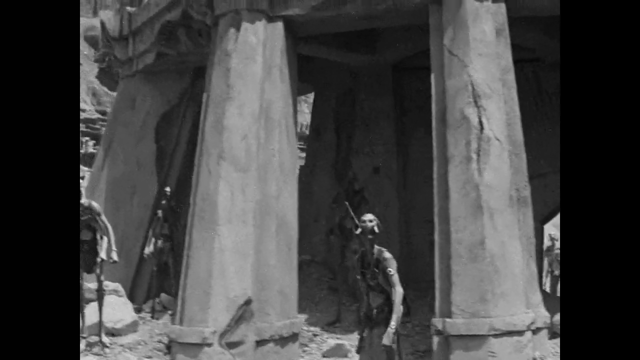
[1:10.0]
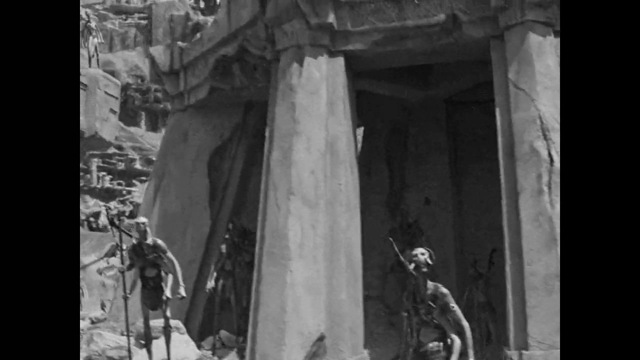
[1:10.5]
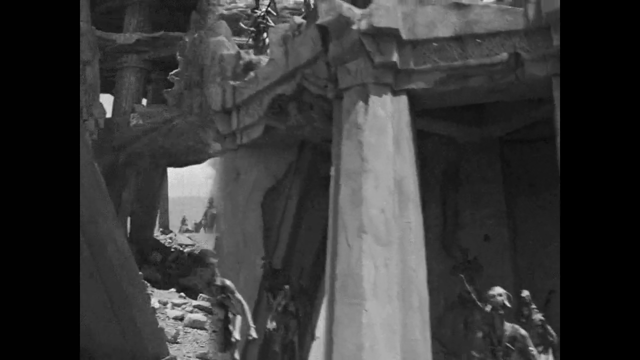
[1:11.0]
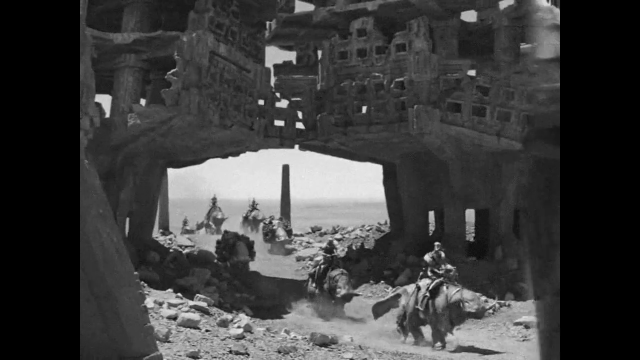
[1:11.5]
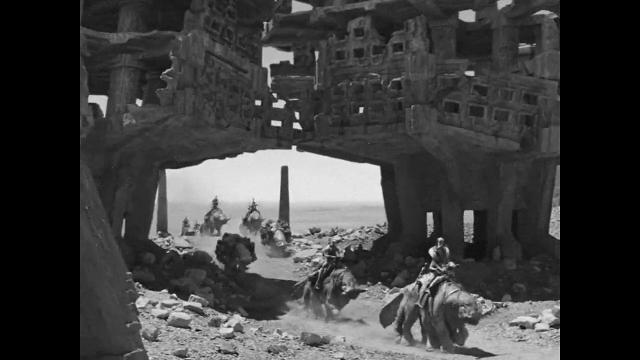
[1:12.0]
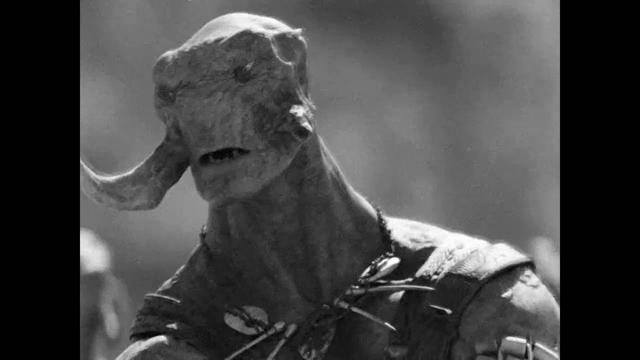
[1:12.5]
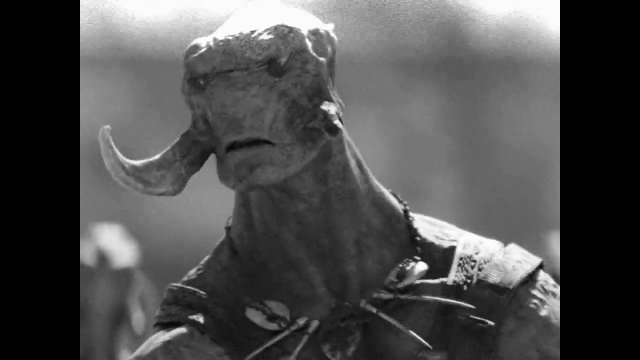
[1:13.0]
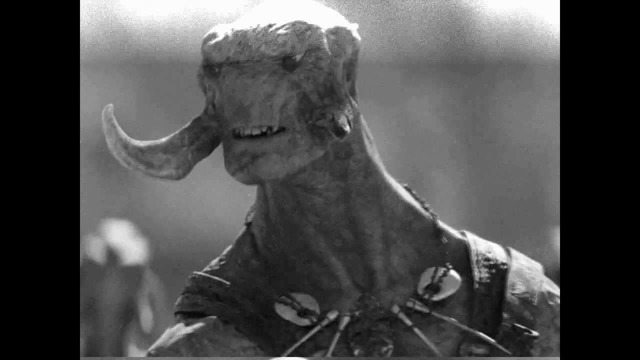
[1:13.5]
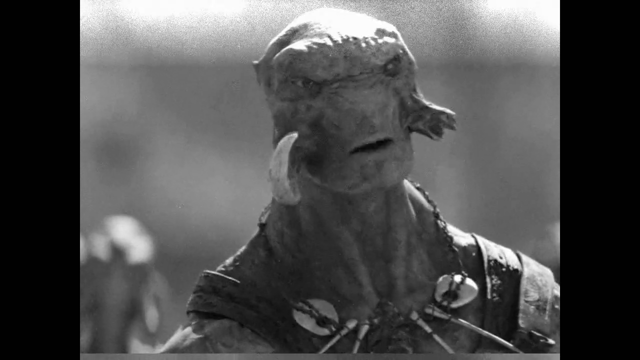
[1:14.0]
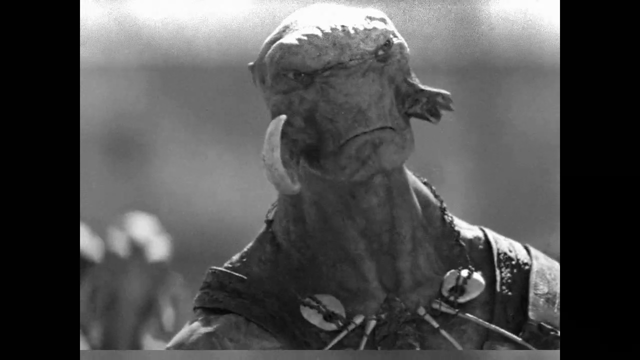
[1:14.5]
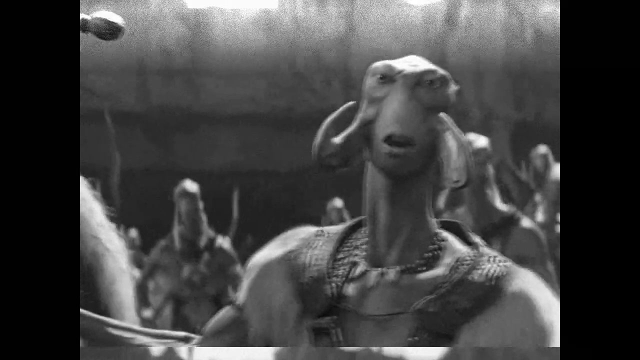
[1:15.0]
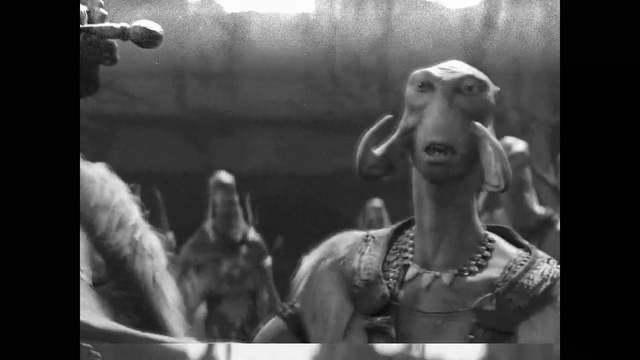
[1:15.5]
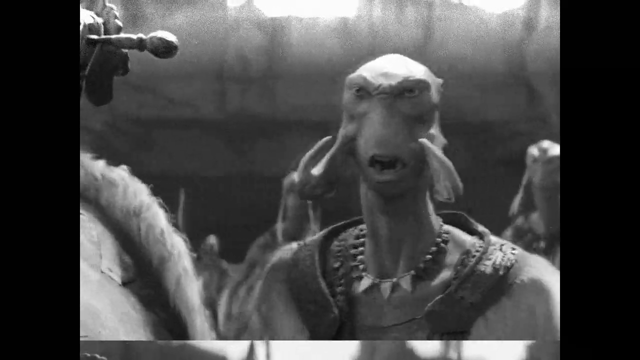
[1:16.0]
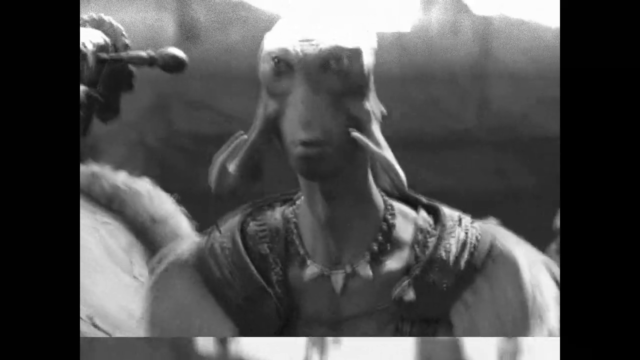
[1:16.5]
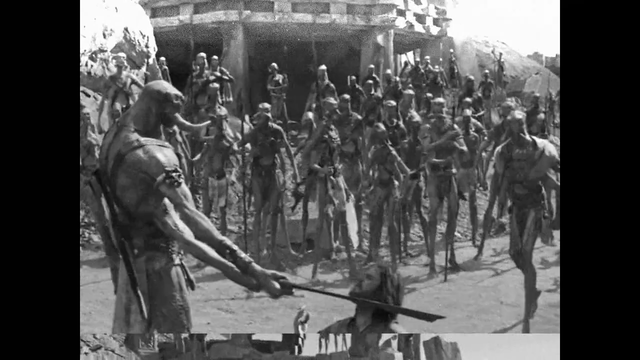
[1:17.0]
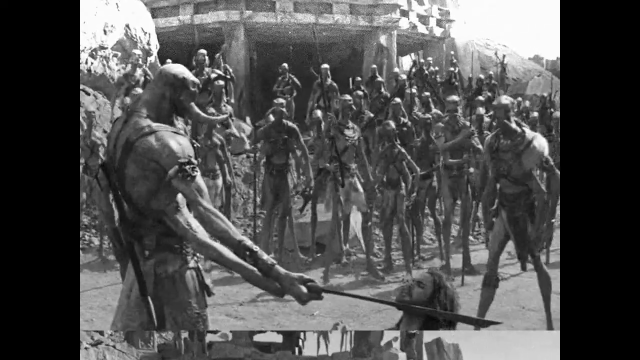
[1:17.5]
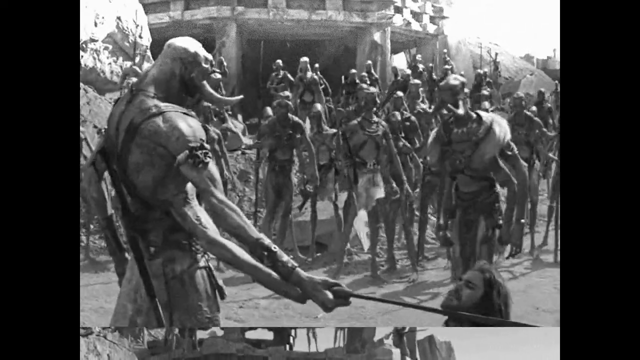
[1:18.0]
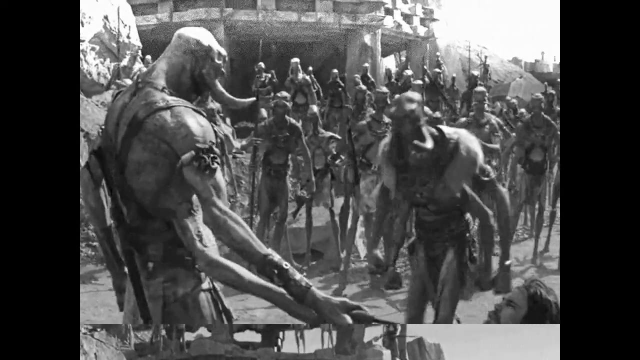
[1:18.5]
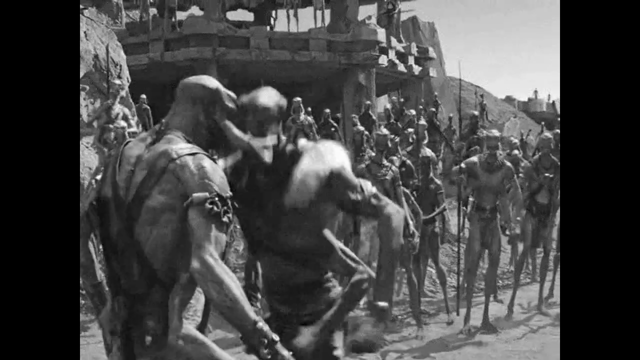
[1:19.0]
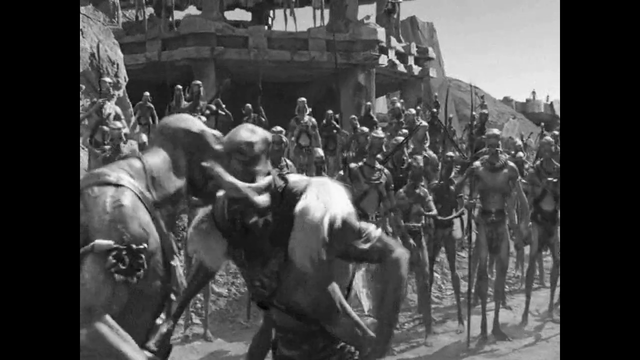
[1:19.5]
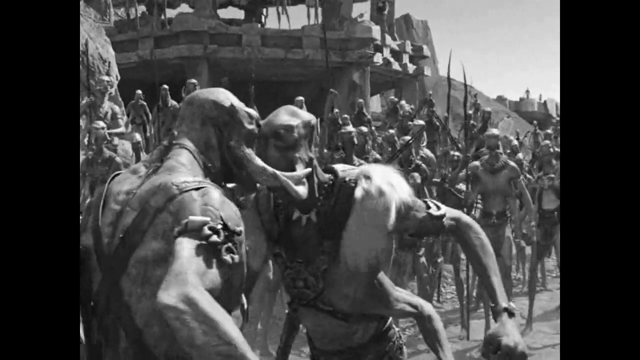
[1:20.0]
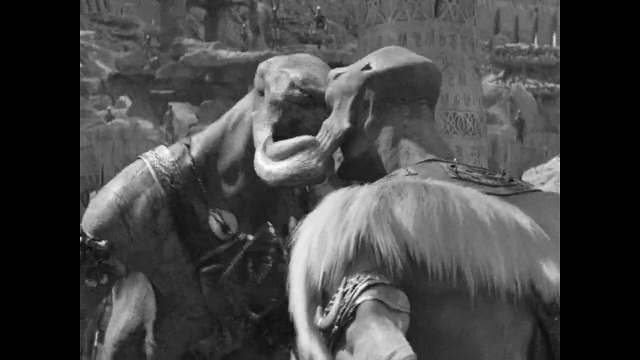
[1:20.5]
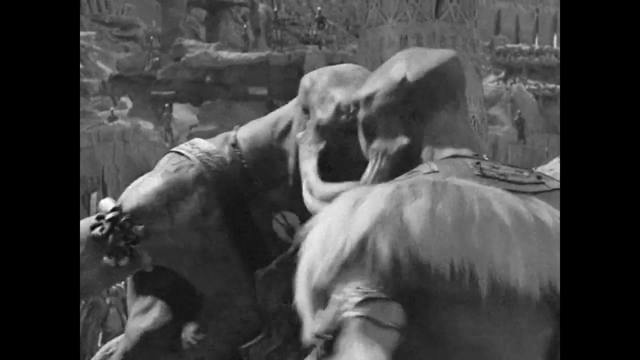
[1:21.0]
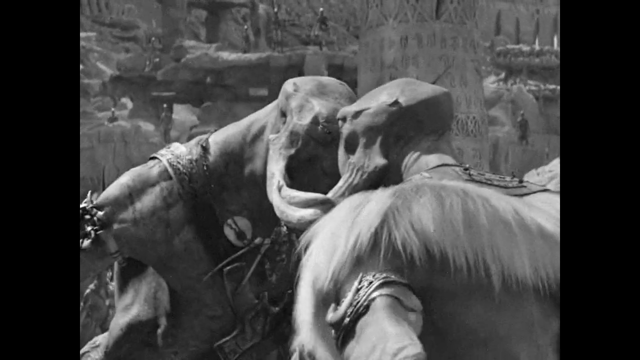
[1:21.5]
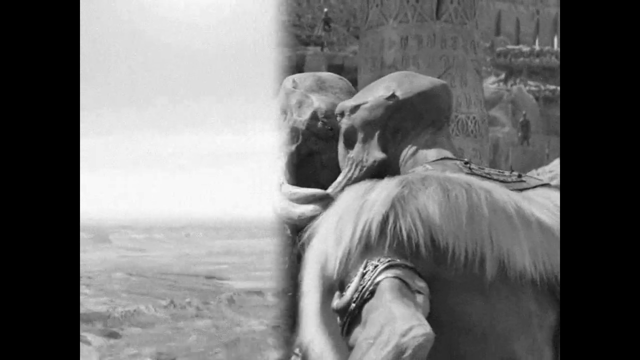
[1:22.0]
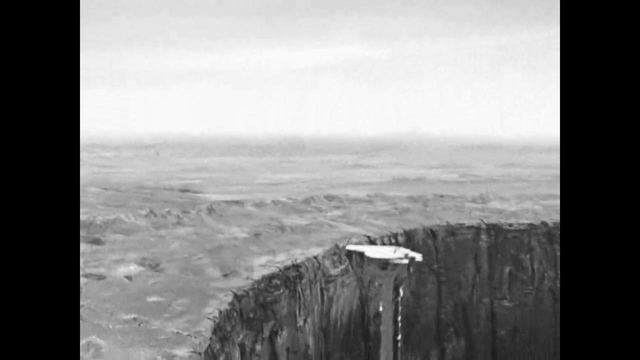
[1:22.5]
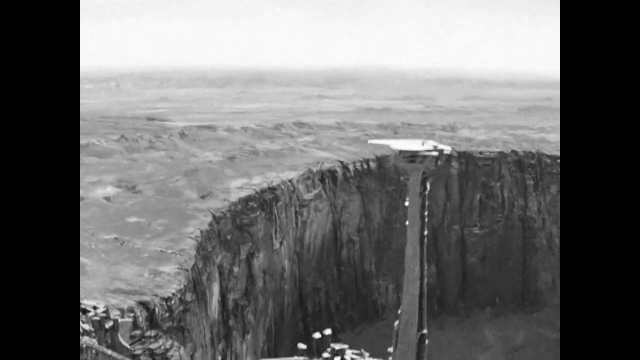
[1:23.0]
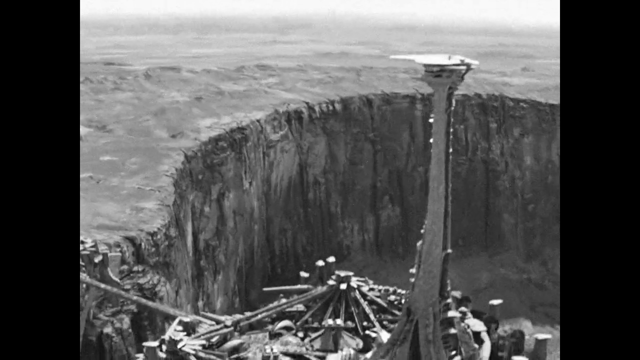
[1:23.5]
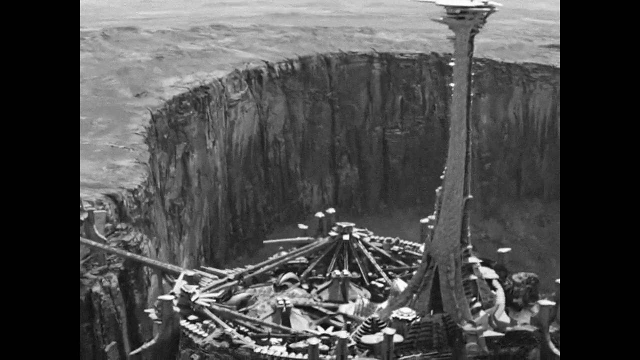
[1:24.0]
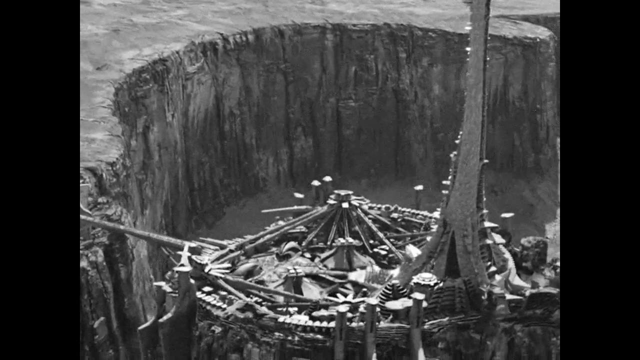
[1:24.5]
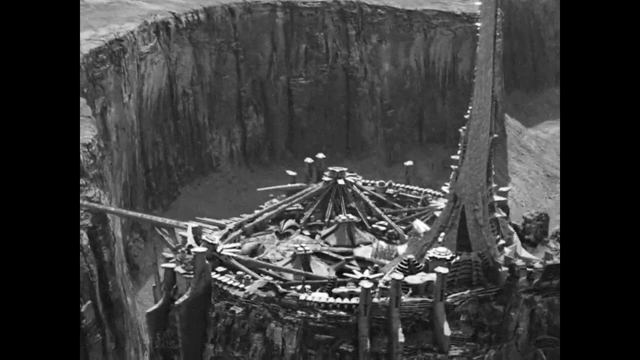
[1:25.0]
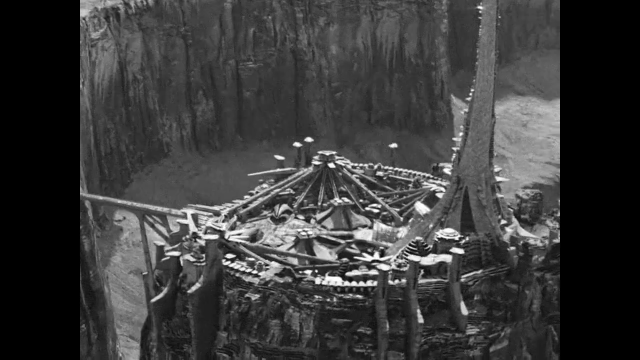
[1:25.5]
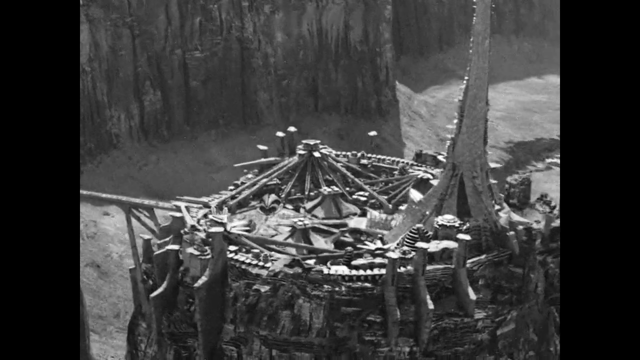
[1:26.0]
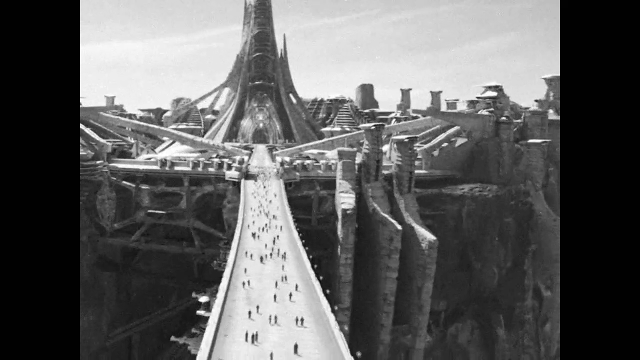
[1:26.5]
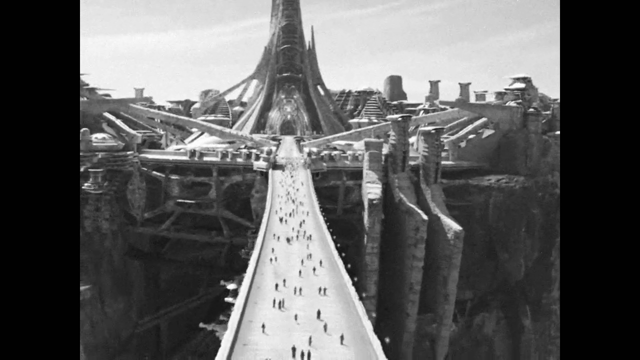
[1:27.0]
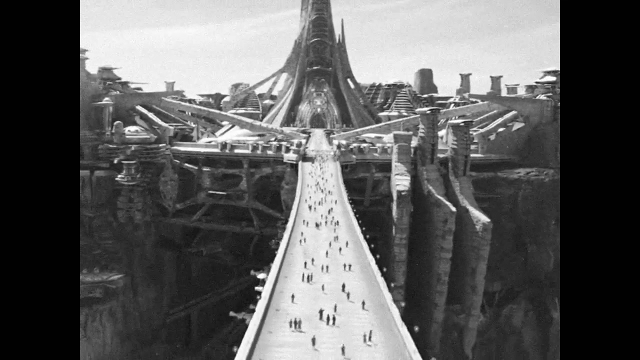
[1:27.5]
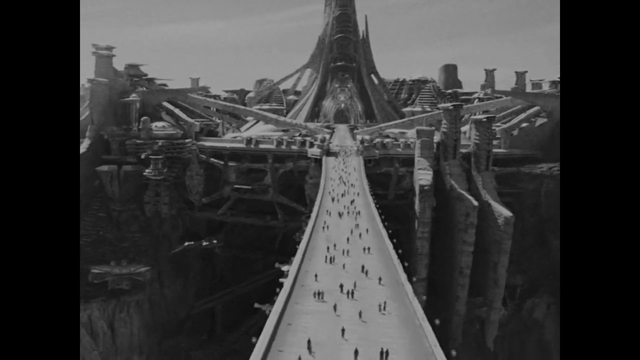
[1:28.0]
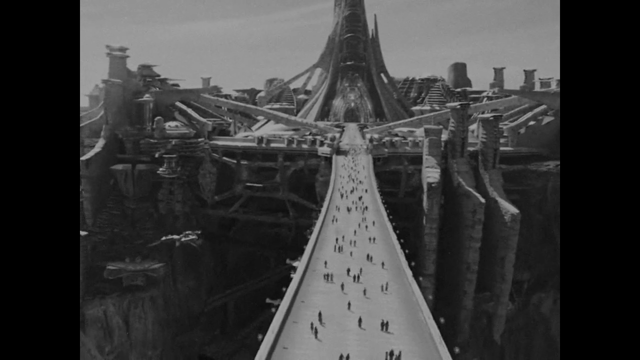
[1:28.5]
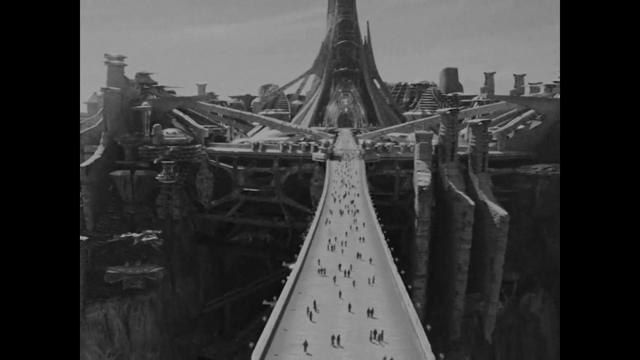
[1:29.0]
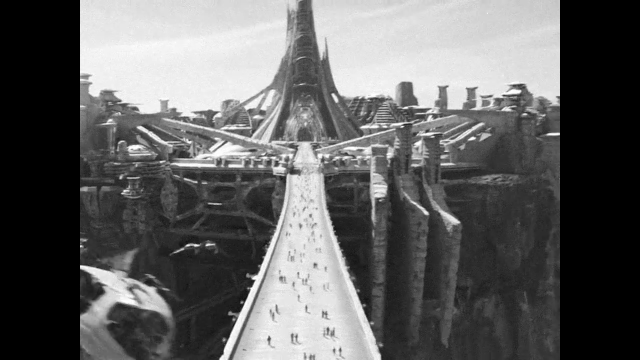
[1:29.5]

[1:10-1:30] Creatures are on a building with huge columns, coming out from inside it. One of the creatures talks with other creatures; they have someone's head and seem to be deciding whether to cut someone's head off. Two creatures fight each other, as if testing which is stronger. Another building appears near a huge ravine. A huge bridge with lots of people crossing it runs from the huge abyss to this strange building, and spaceships pass the bridge from above and below. The figures are too small and too grey to tell whether they are people or creatures.